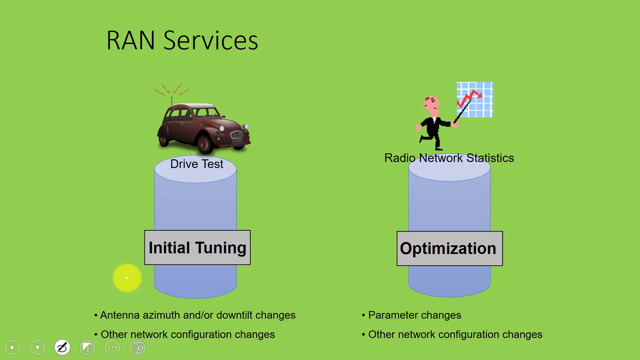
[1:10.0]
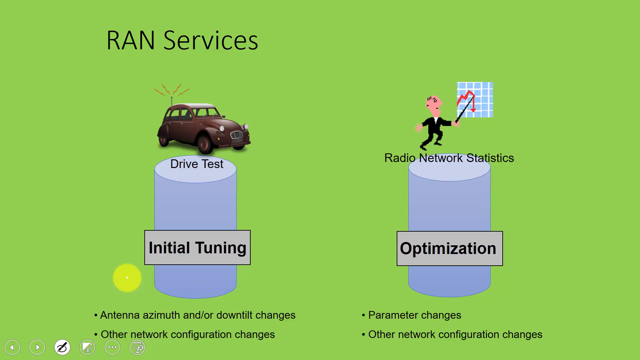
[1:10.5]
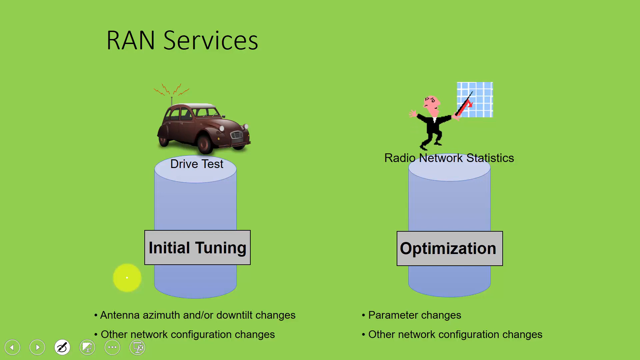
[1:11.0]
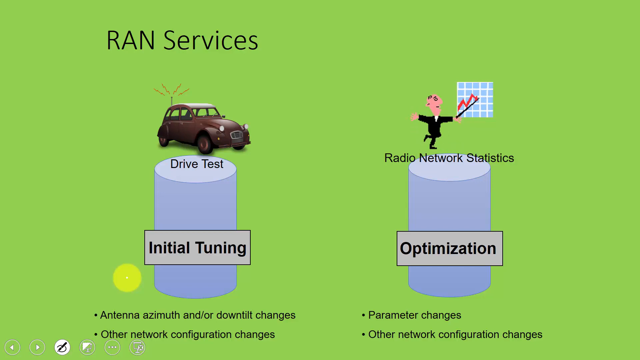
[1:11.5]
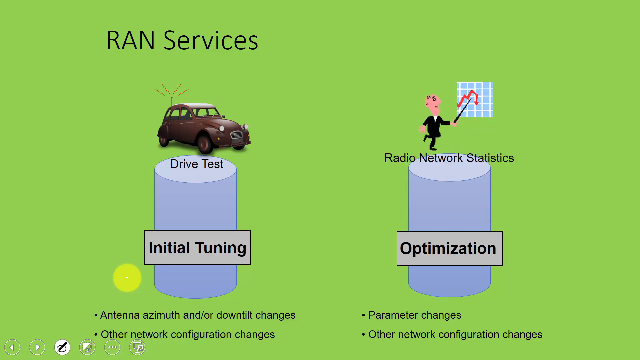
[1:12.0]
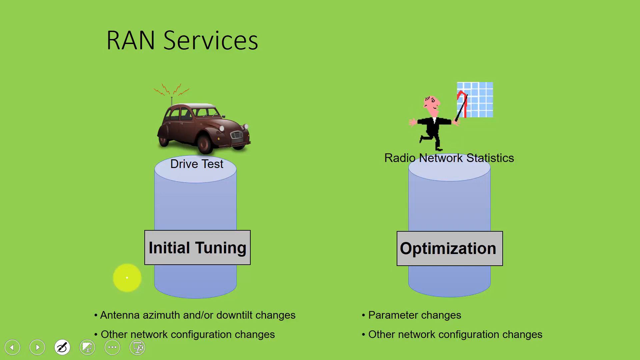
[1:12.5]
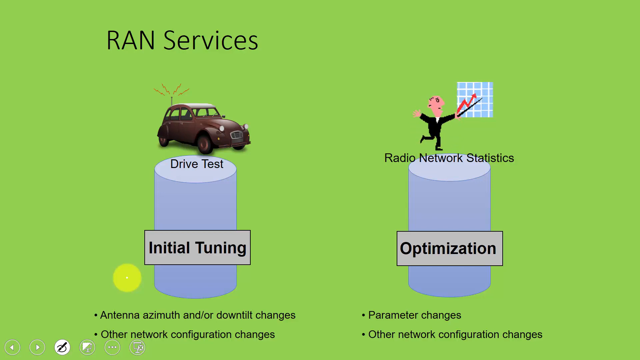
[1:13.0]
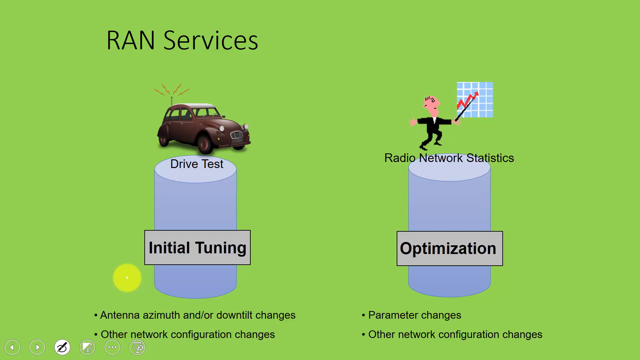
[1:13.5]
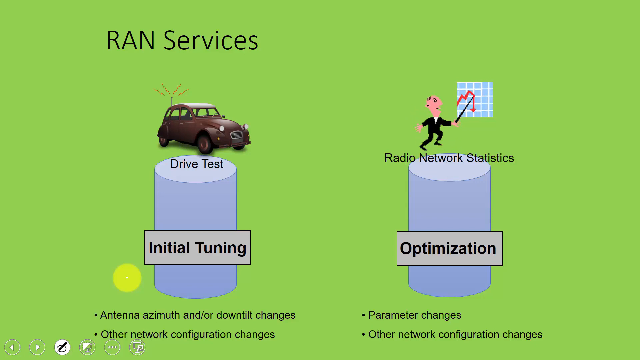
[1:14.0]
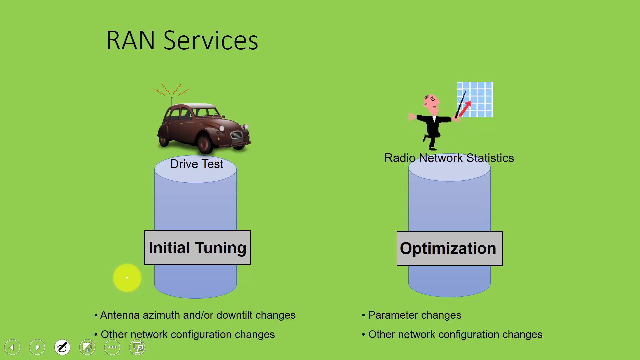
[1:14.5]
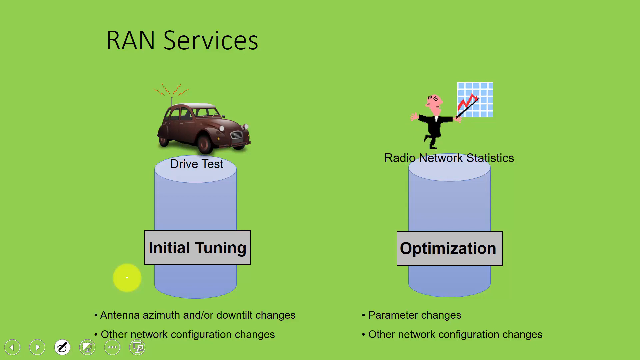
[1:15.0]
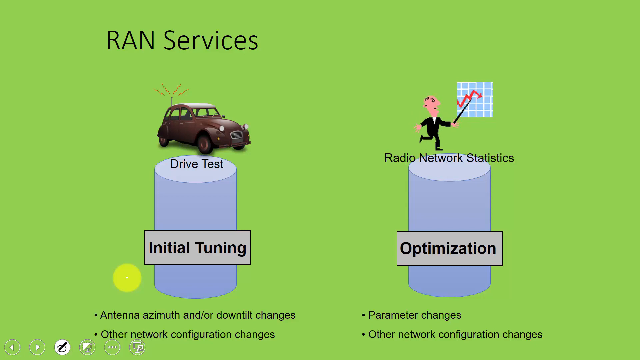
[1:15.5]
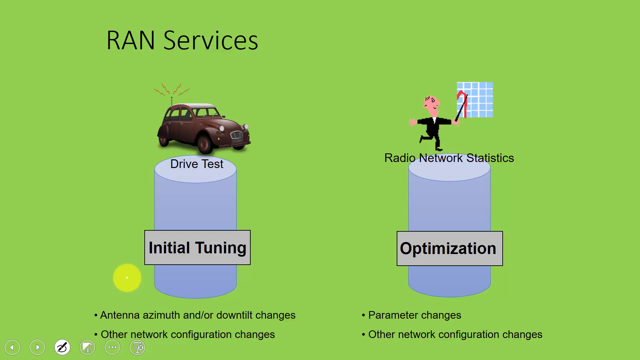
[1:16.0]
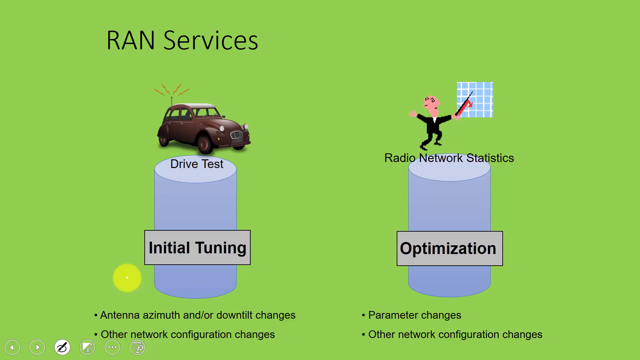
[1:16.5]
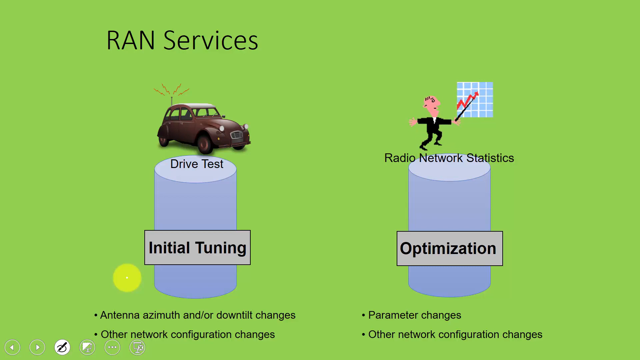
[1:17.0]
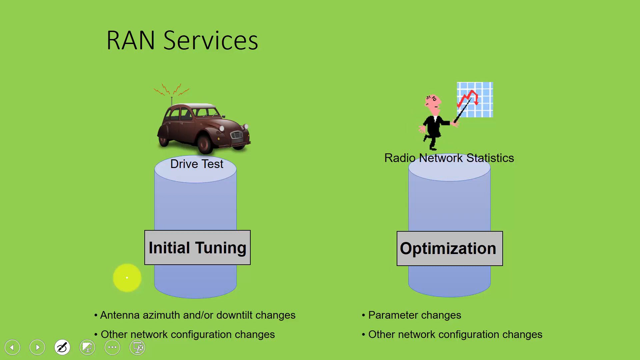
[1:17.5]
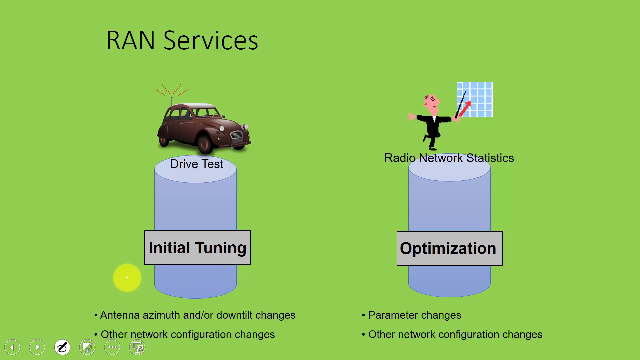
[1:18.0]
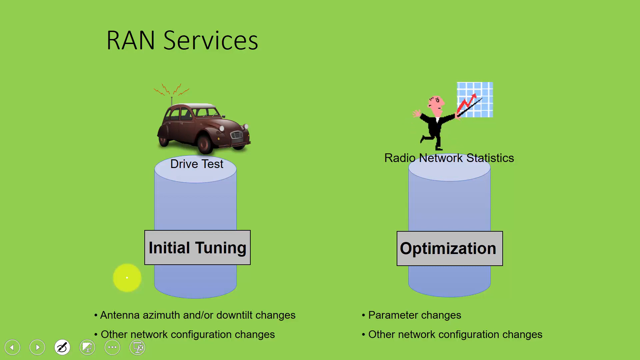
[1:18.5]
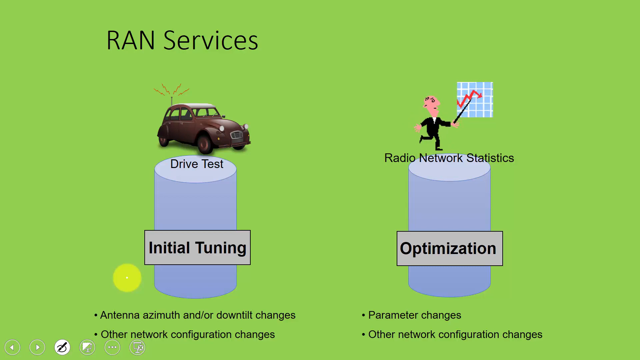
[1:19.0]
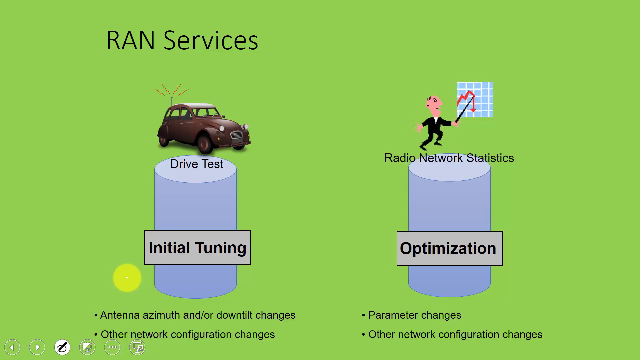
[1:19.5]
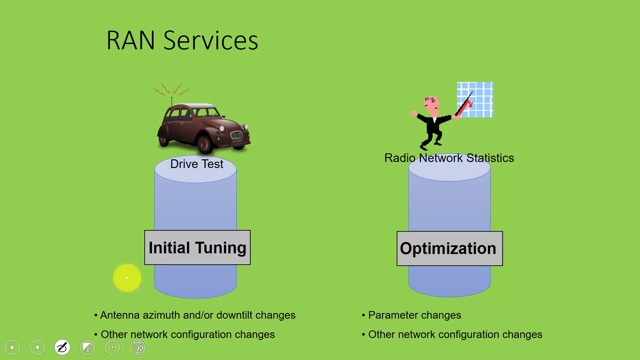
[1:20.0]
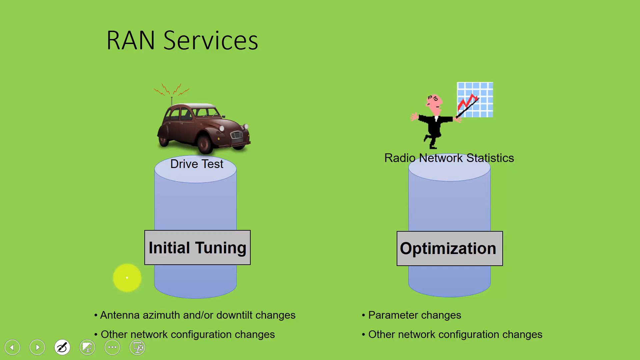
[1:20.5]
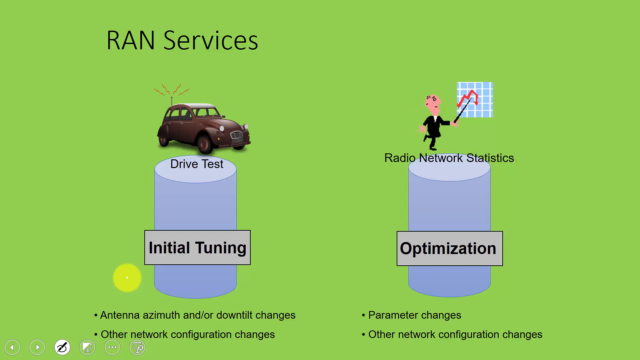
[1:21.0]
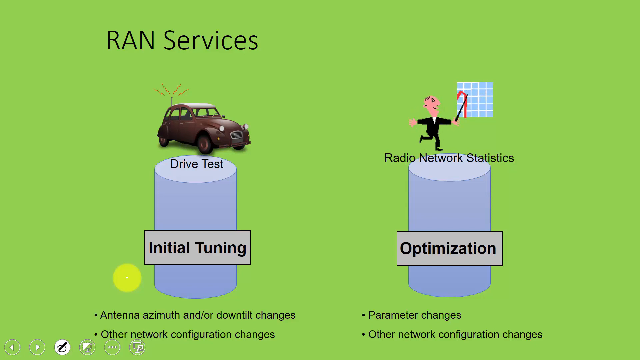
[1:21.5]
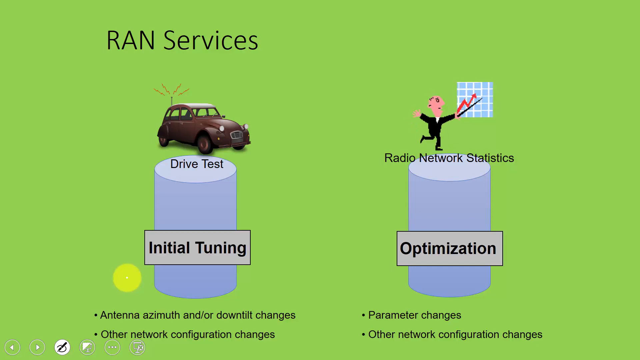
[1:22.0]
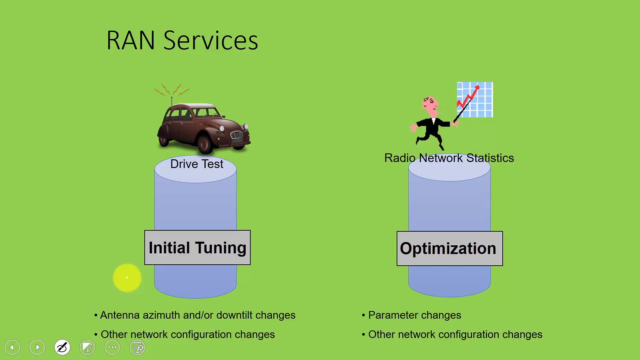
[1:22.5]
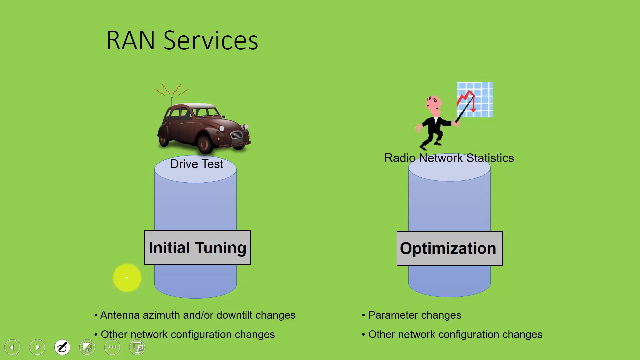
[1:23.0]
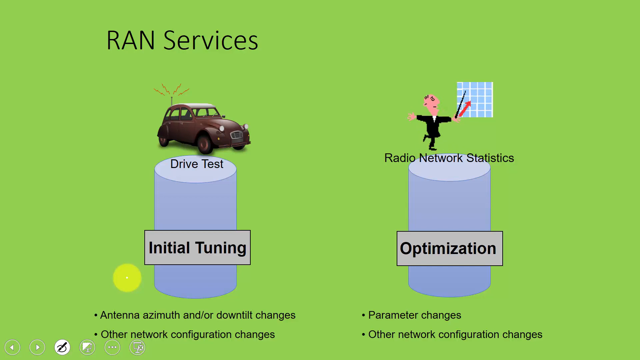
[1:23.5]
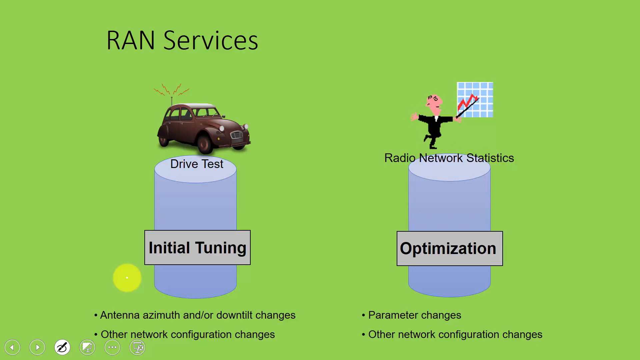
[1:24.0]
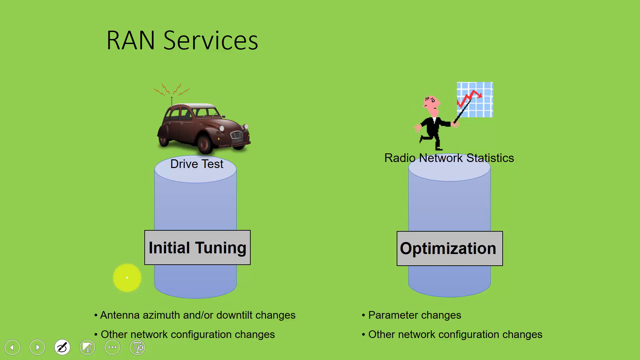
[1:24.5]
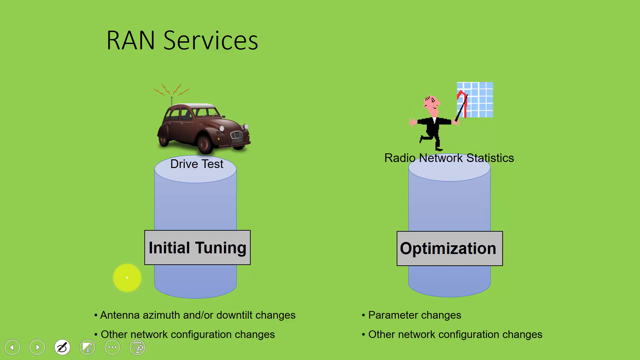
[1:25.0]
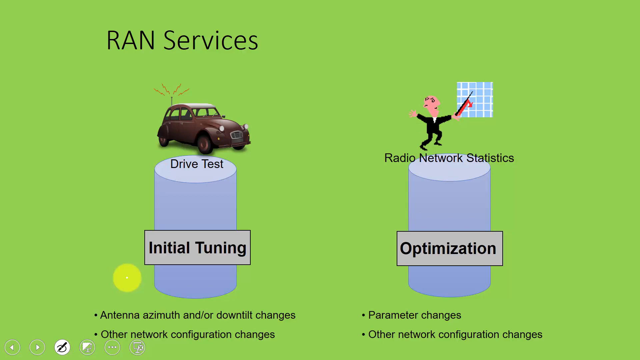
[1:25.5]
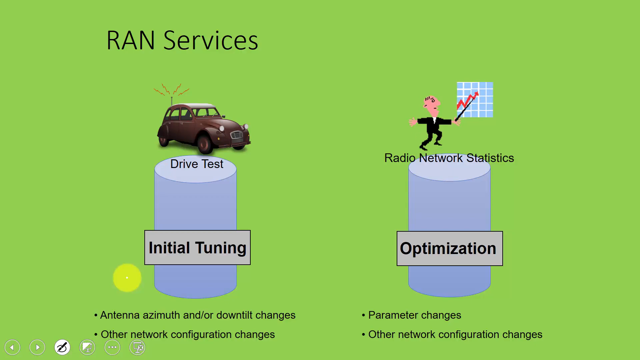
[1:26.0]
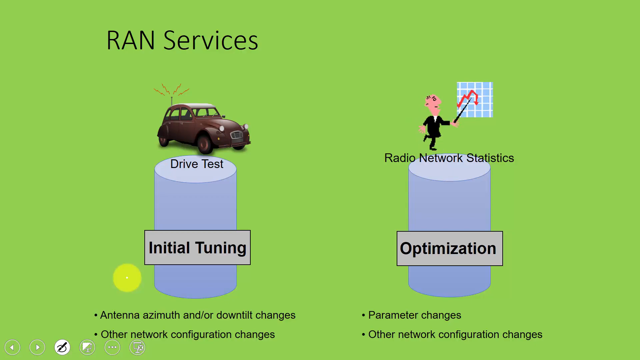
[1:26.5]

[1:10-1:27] The same slide continues, with a green background and "RAN services" in capital black letters at the top. There are two dark gray columns with light gray flat tops, and each has a label and an icon picture above it. All the lettering is black. A yellow circle, apparently representing the mouse, is about even with the bottom of the first cylinder. An animation runs over and over, but otherwise nothing moves and there is no mouse movement. The first column is initial tuning, set in a sub-box with a light brown background and a black edge, with the words "initial tuning" in black and "drive test" below the car on top. Optimization follows the same scheme, a light brown box with a black edge and black letters, with "radio network services" and an animated icon of a man drawing a graph.